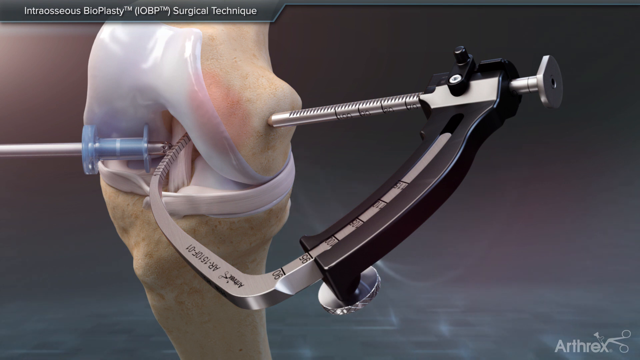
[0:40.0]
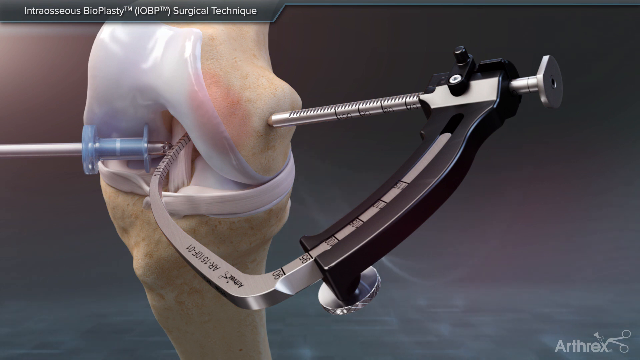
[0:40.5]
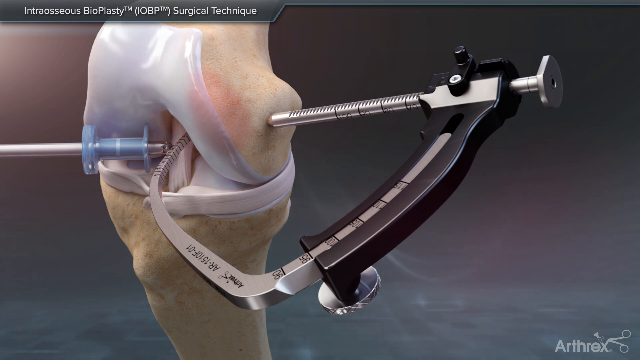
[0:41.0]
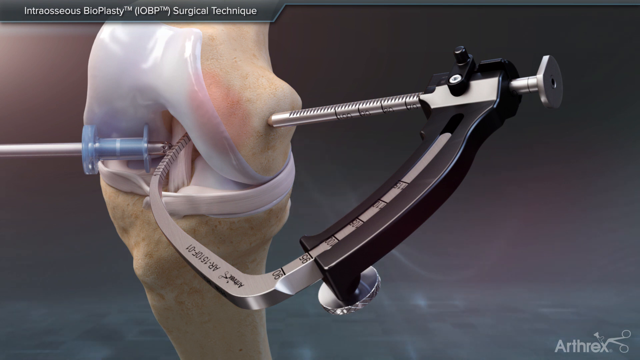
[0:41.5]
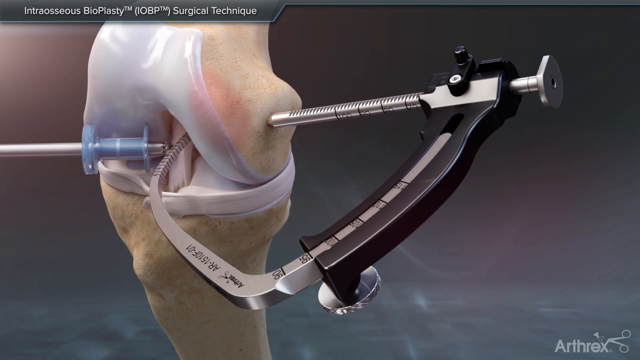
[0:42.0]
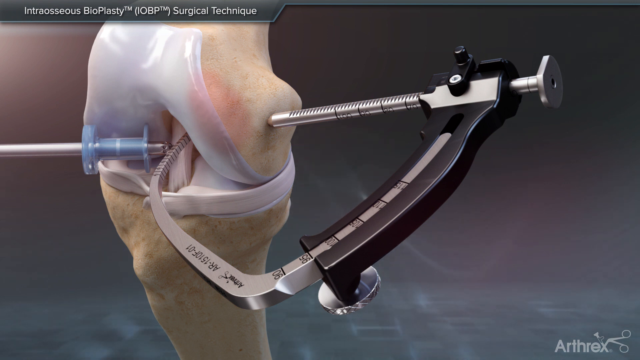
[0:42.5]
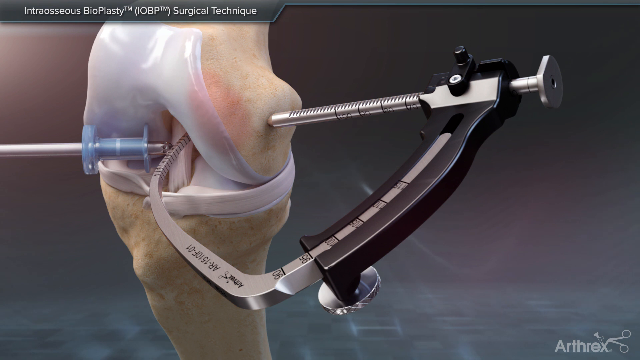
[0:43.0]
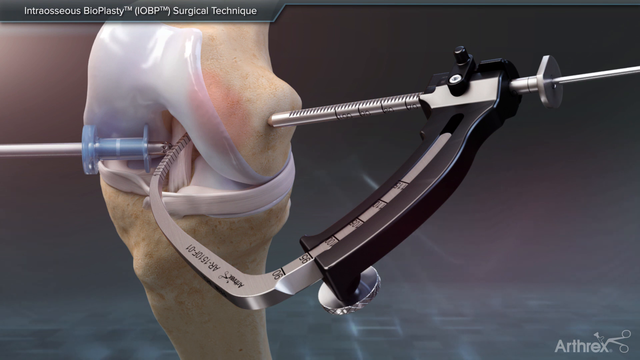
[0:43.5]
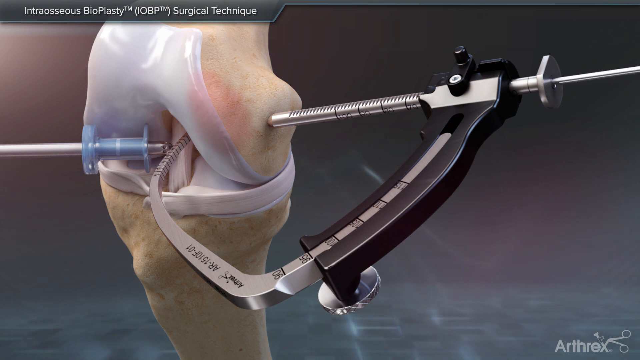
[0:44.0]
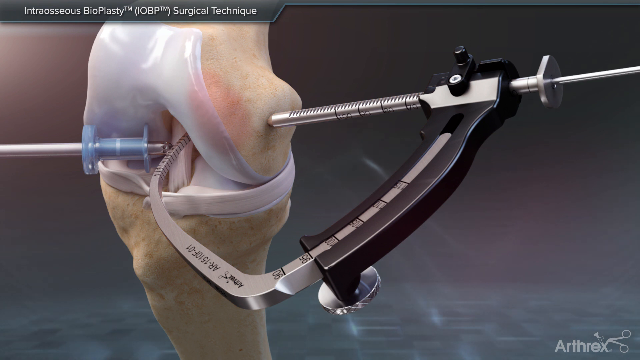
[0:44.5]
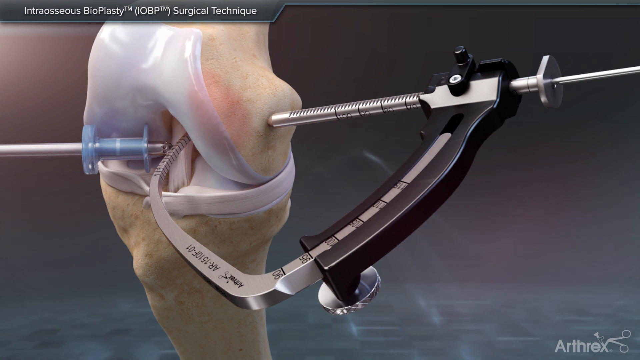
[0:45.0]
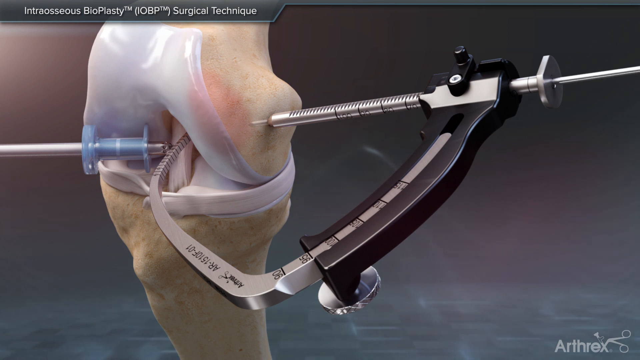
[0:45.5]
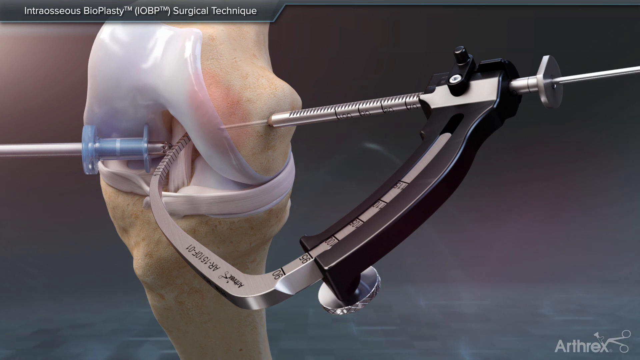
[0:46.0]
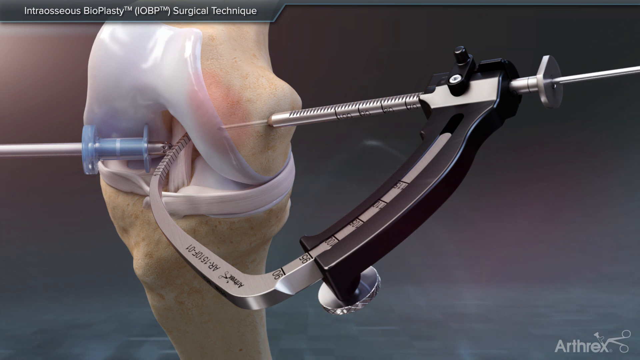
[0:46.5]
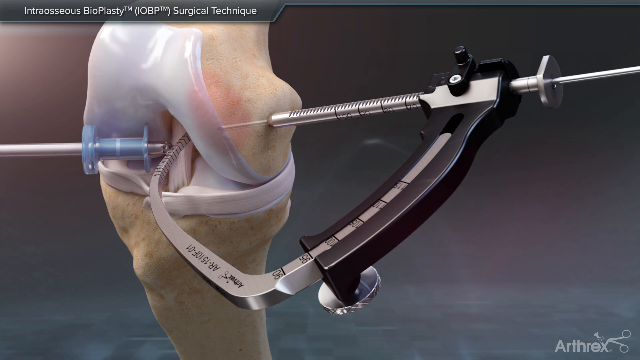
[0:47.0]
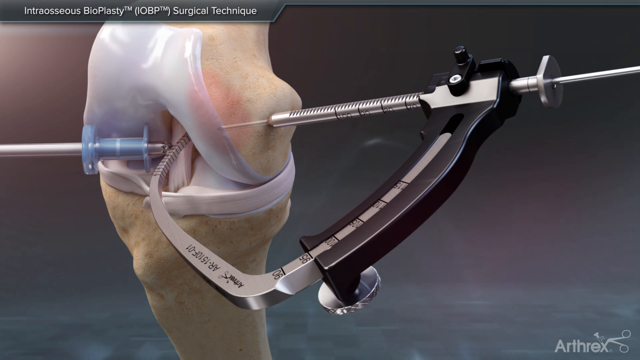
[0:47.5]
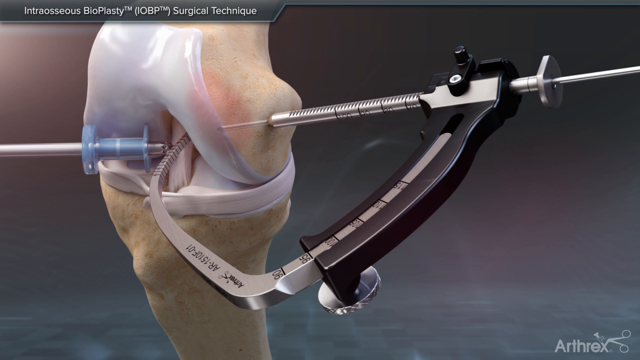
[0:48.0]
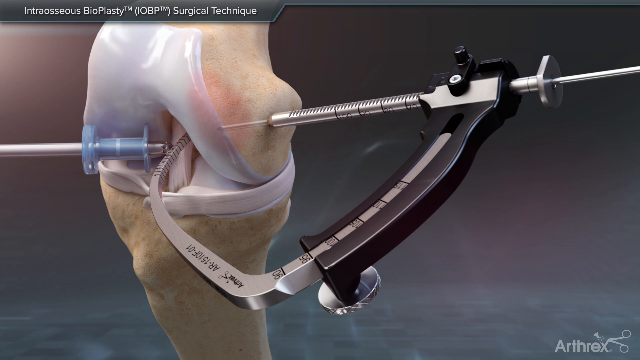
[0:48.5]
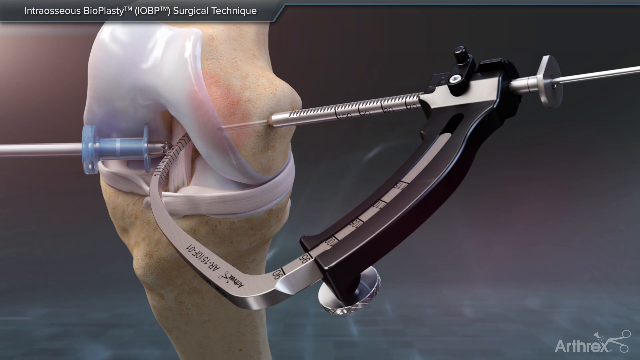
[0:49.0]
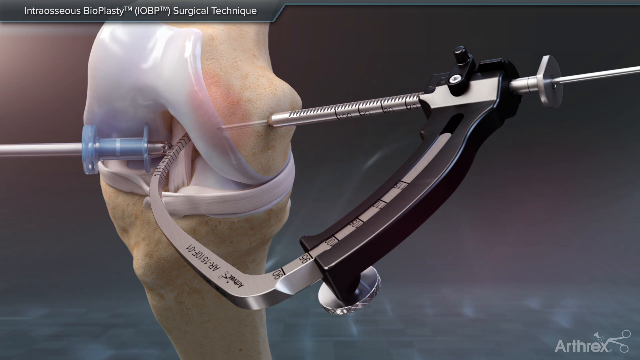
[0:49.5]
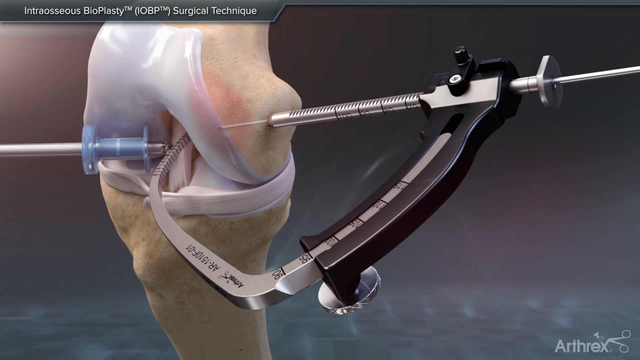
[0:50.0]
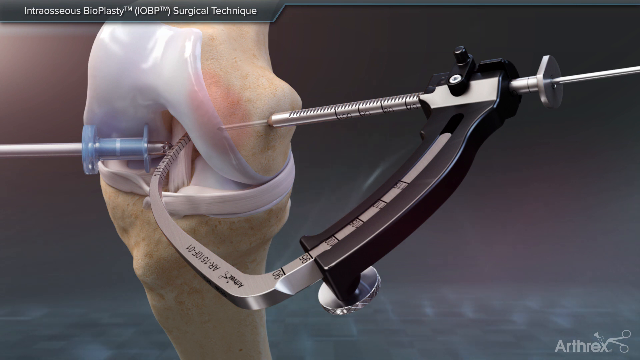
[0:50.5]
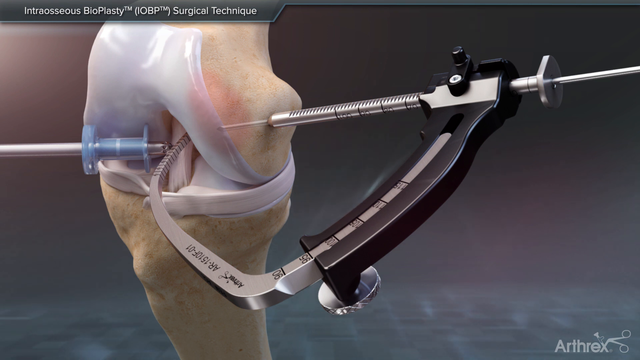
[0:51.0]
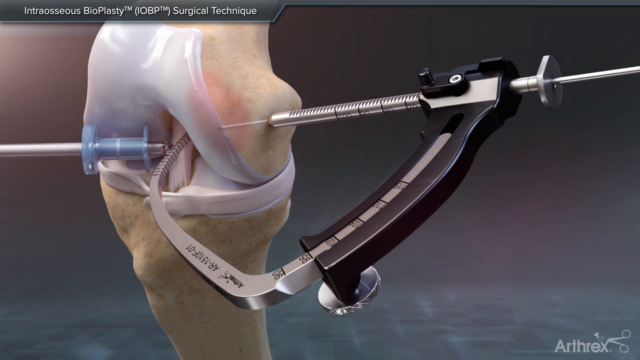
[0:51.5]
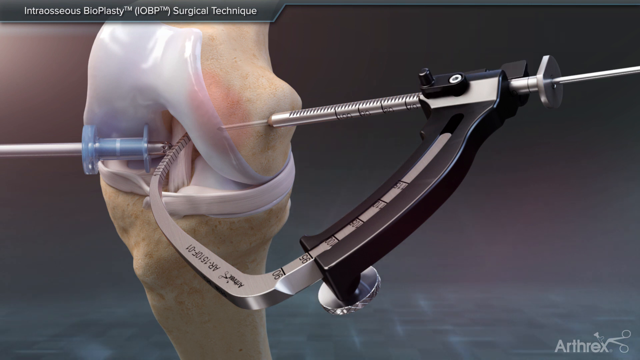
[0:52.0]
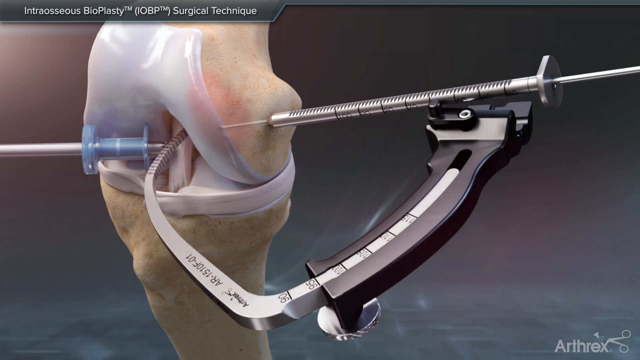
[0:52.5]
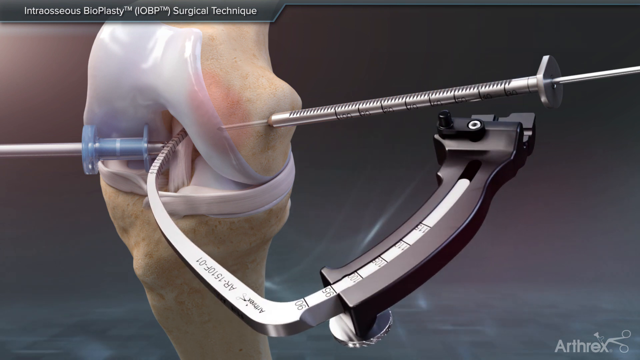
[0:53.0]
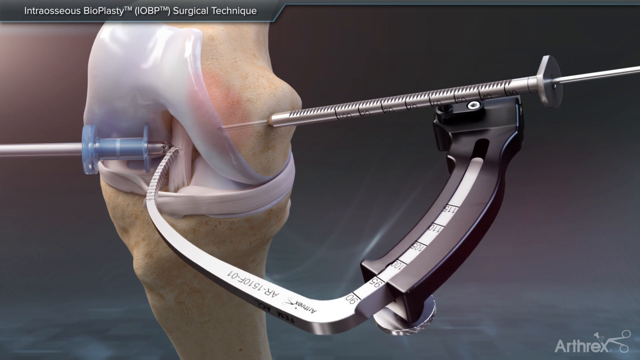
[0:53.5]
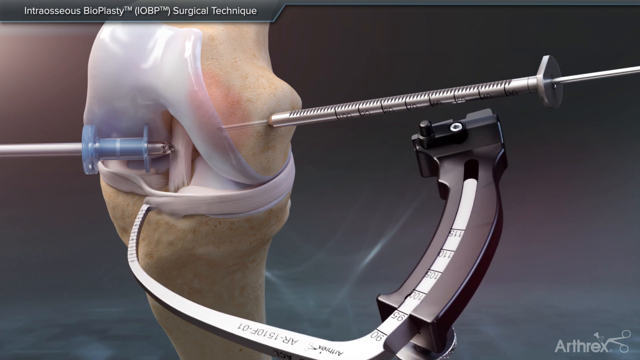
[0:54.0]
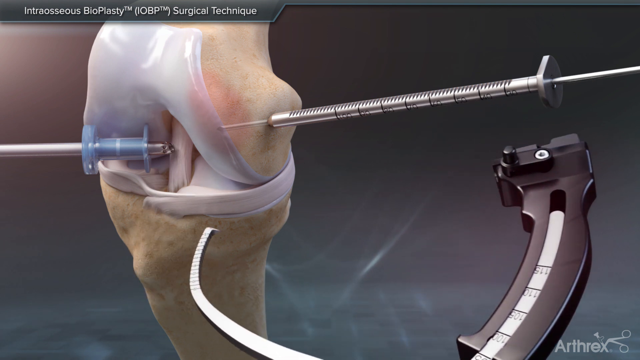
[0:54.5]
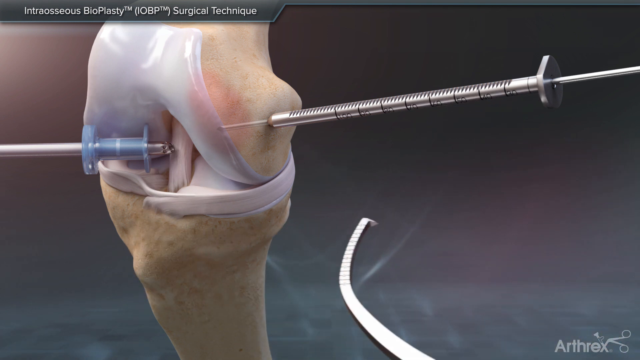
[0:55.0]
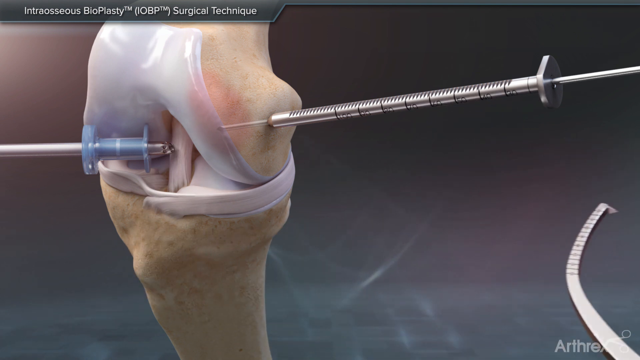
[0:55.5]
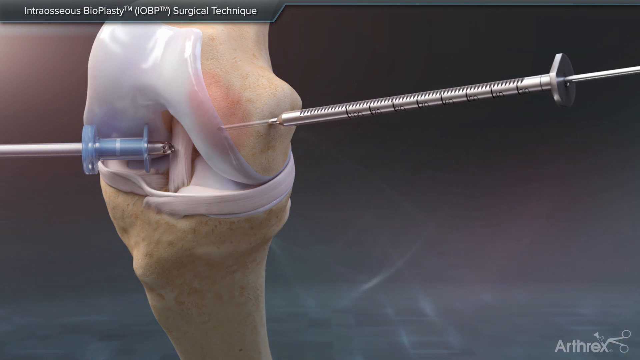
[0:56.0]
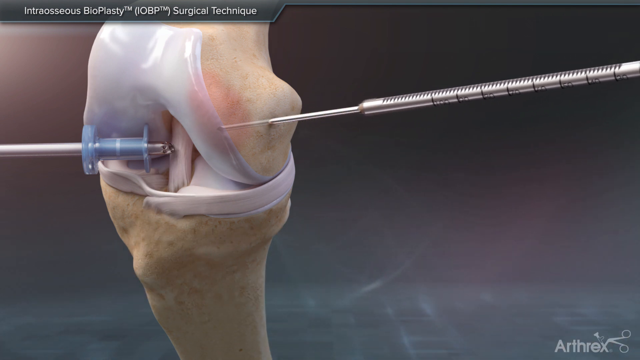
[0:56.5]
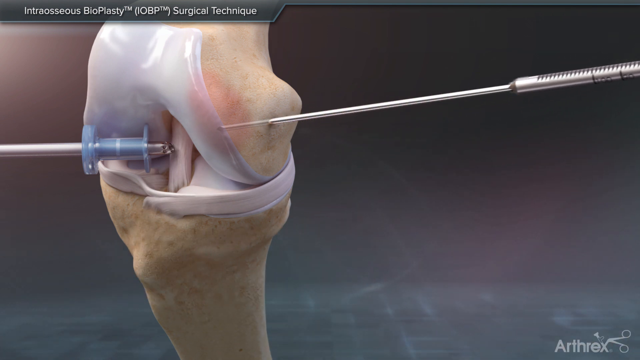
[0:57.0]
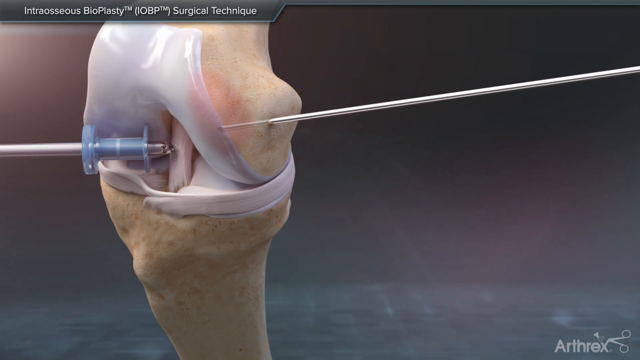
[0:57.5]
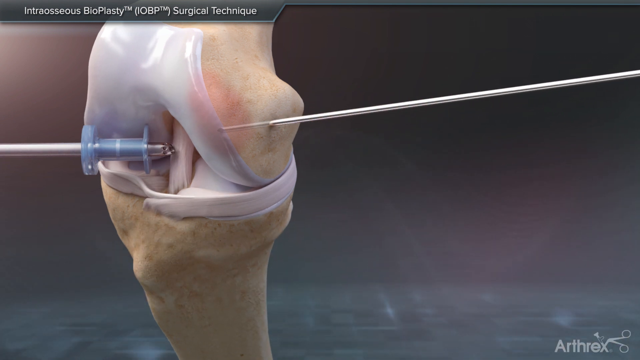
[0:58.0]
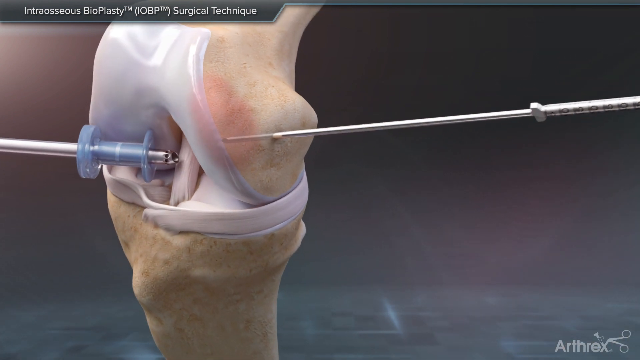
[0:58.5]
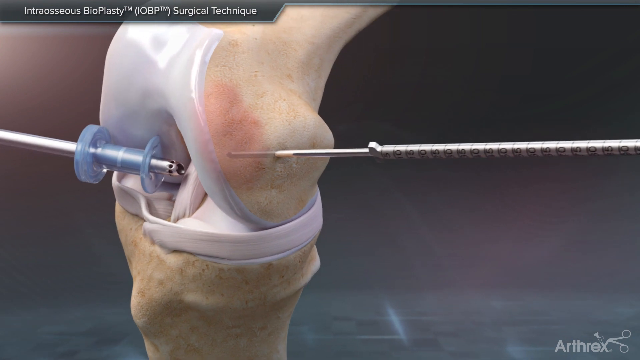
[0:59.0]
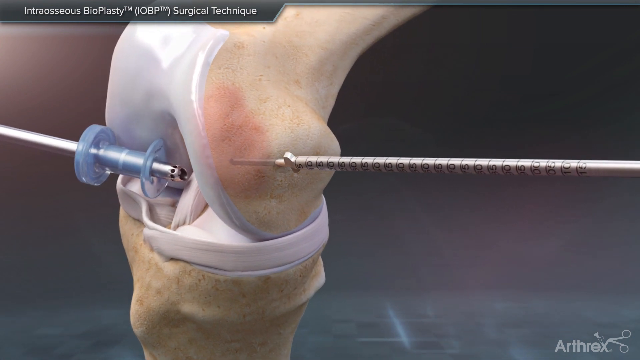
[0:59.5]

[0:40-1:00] A metal clamp with measurements on its side, 90, 95, 100, 105, 110, 115, holds the joint; at the end of the clamp is some tubing that also has measurements on it. A needle is inserted into the top of this clamp and tubing, and the needle is drilled into the bone. Once the needle goes through the bone to the depth where it hits the ligament, the outer edges of the clamp open up, and the clamp piece, apparently a measuring device that also holds the joint together, is removed. The metal needle remains depressed into the bone, and it looks like a screw is placed around the needle into the knee joint.